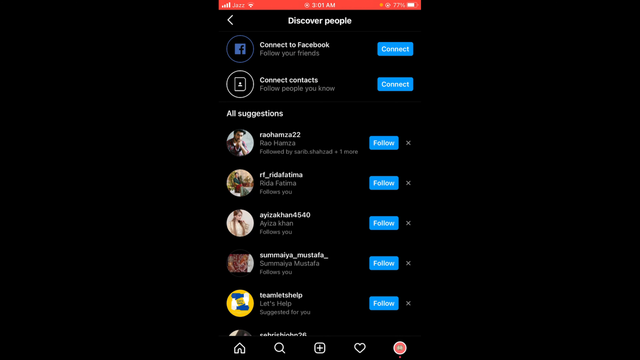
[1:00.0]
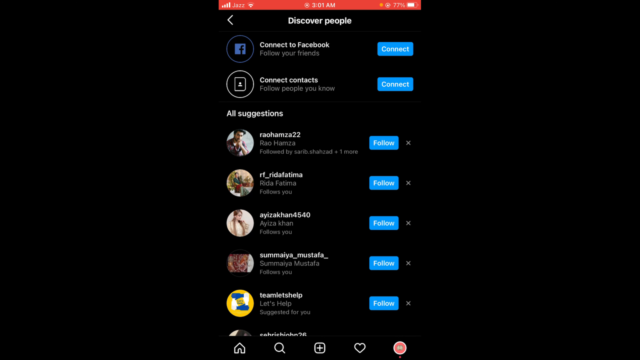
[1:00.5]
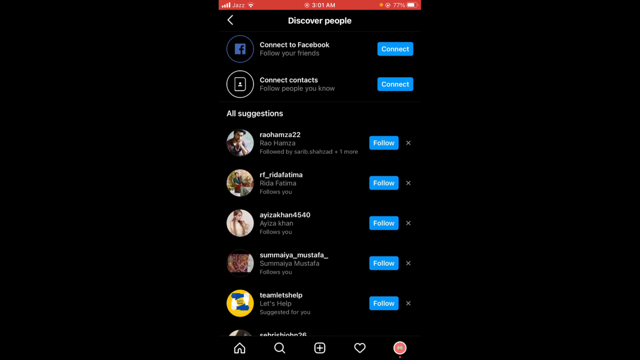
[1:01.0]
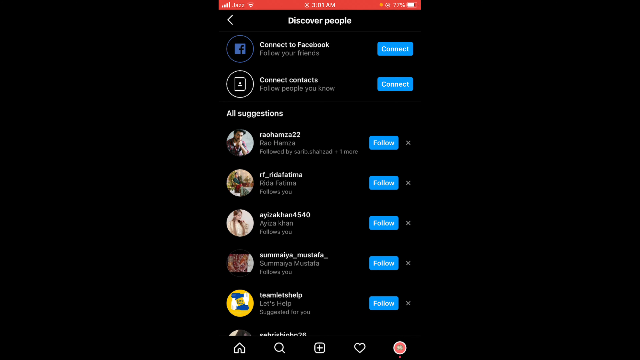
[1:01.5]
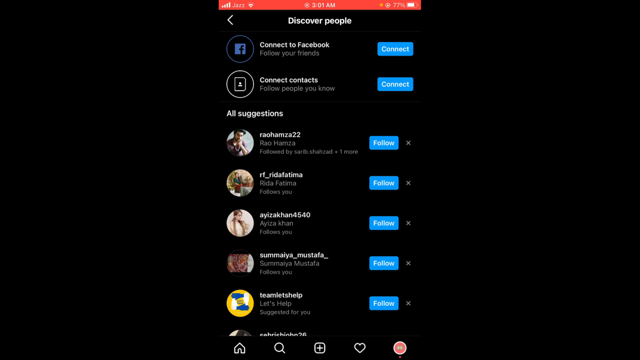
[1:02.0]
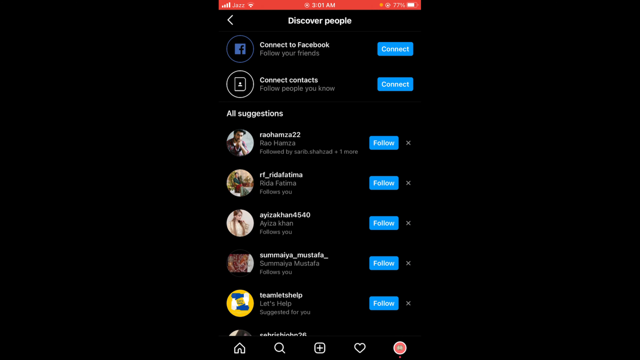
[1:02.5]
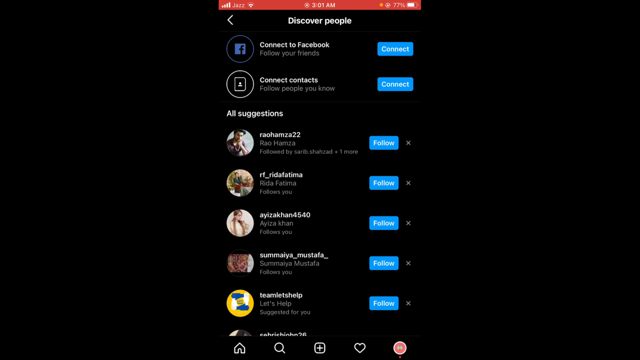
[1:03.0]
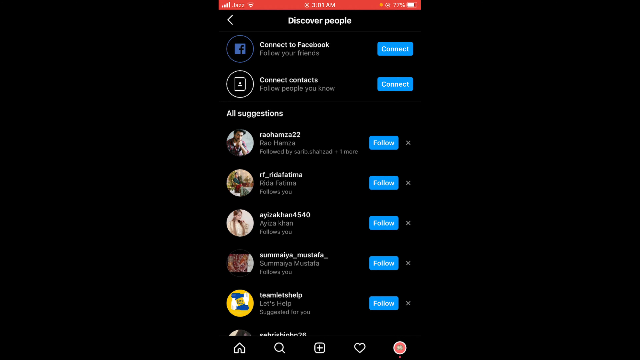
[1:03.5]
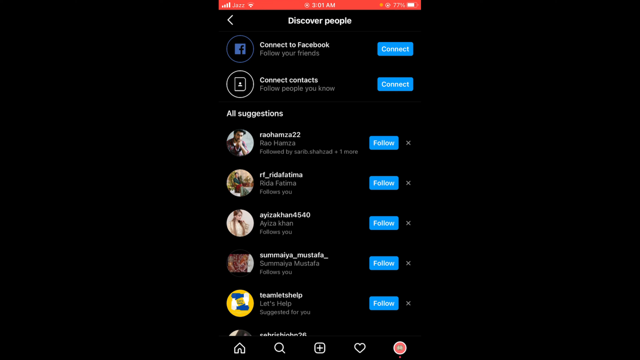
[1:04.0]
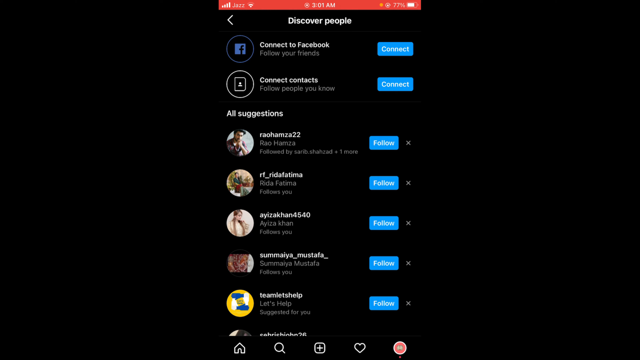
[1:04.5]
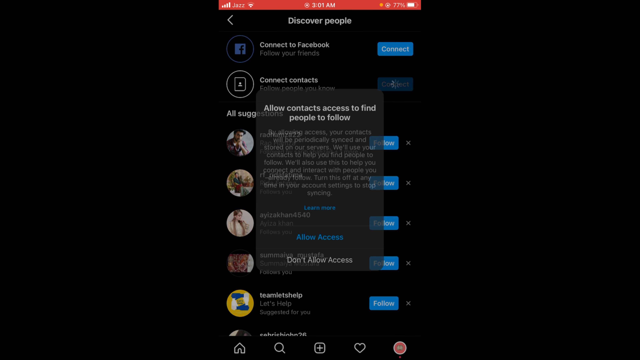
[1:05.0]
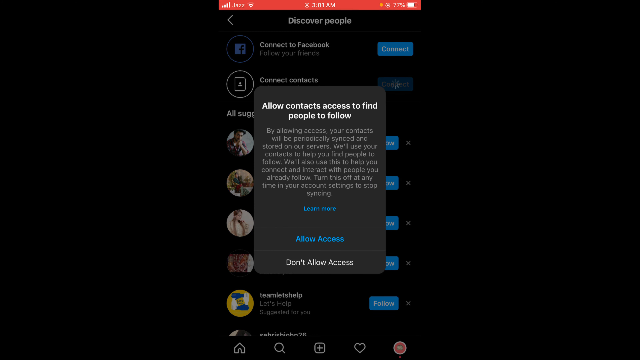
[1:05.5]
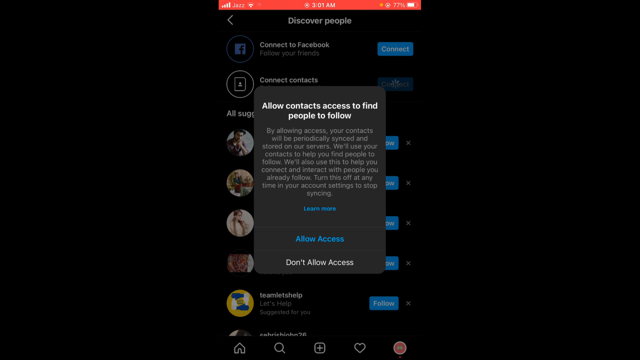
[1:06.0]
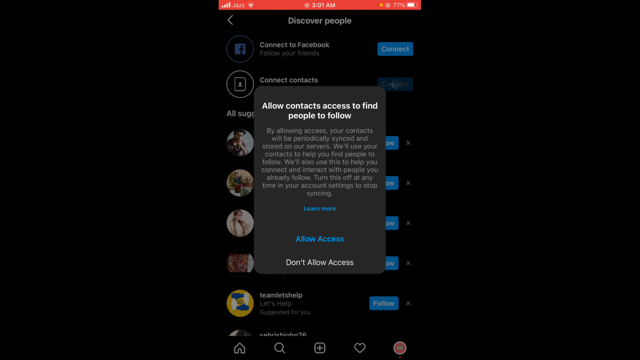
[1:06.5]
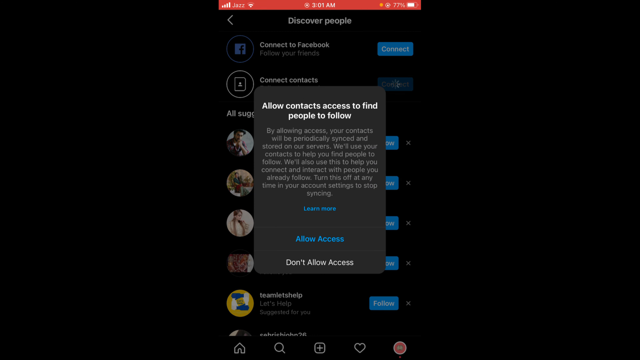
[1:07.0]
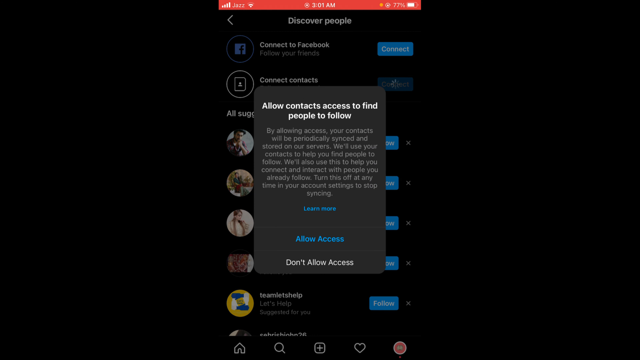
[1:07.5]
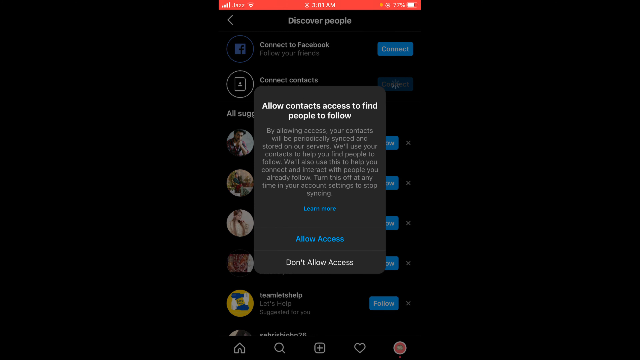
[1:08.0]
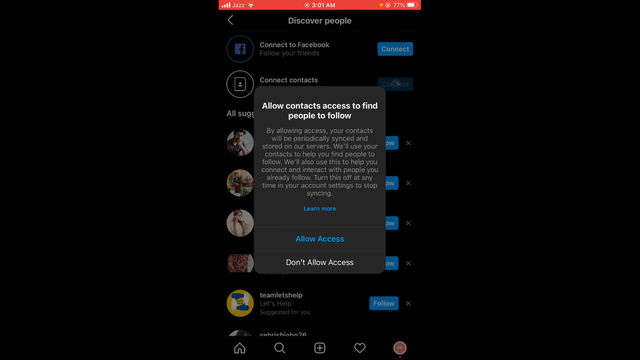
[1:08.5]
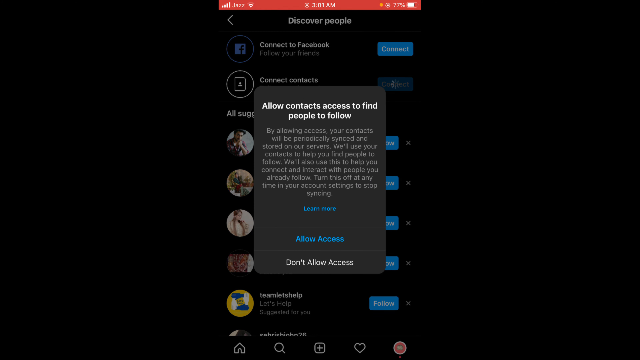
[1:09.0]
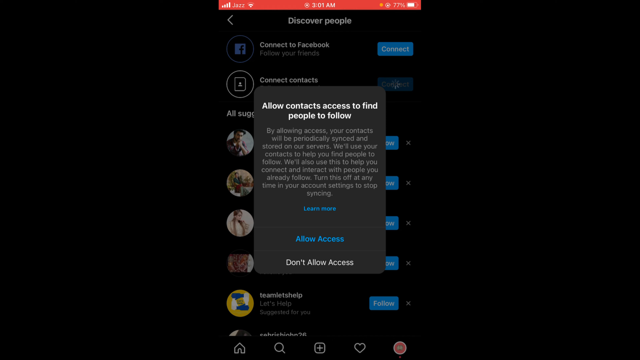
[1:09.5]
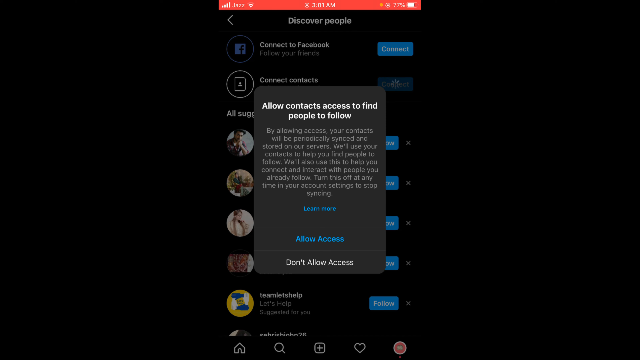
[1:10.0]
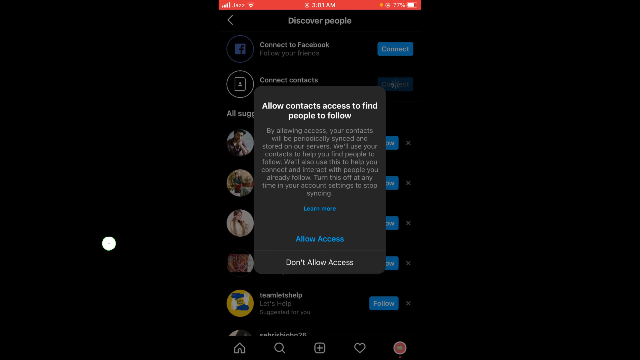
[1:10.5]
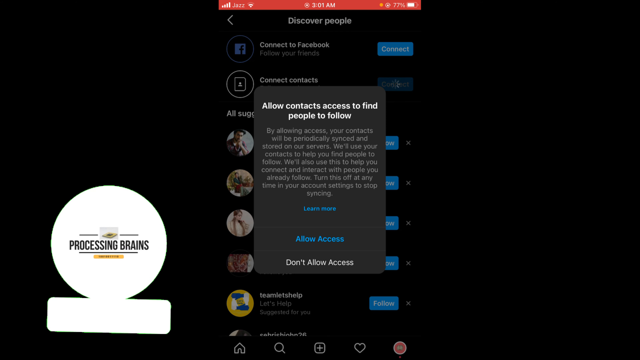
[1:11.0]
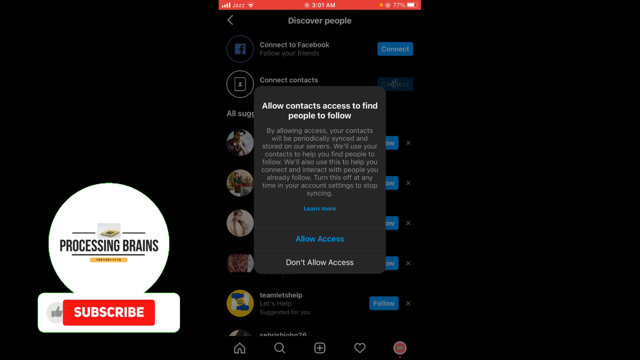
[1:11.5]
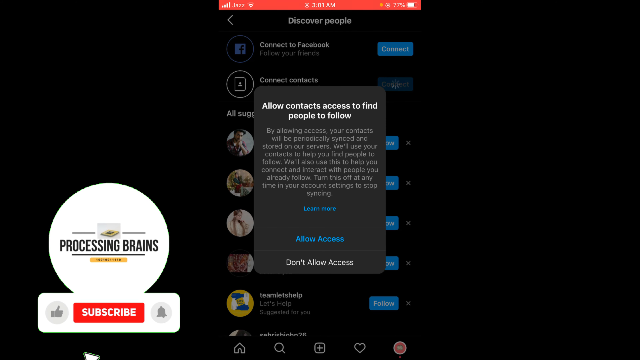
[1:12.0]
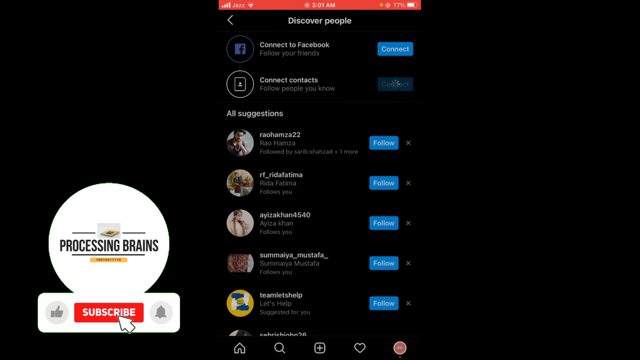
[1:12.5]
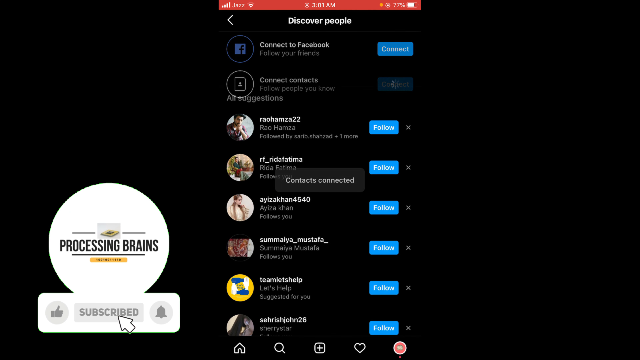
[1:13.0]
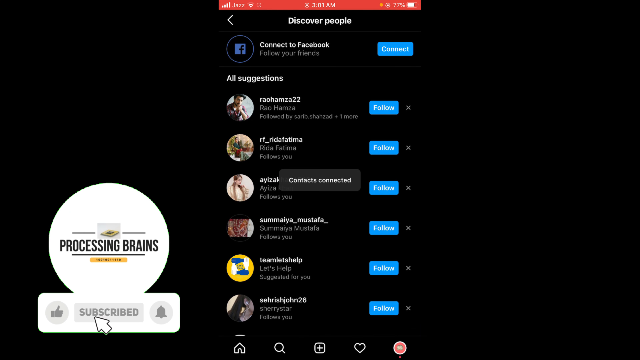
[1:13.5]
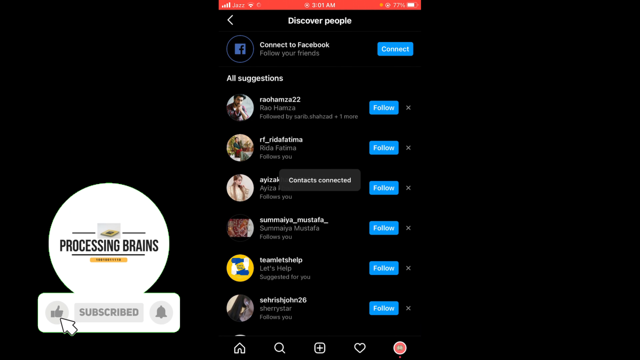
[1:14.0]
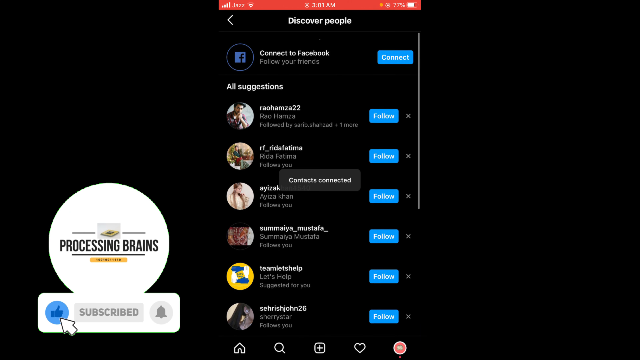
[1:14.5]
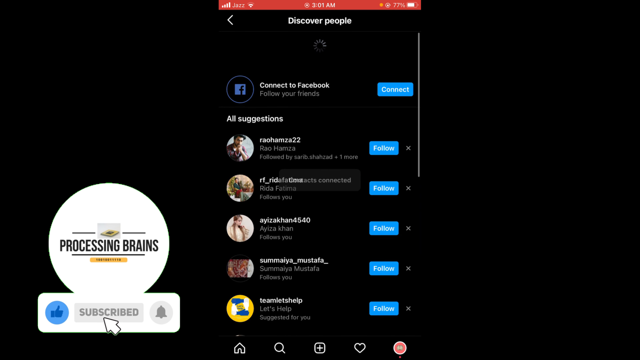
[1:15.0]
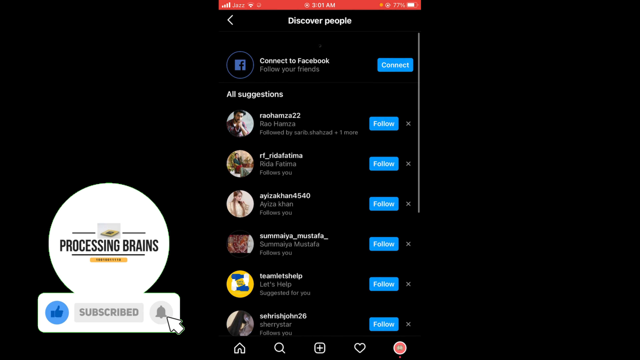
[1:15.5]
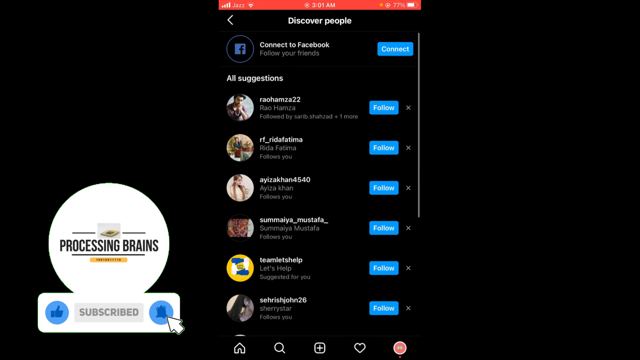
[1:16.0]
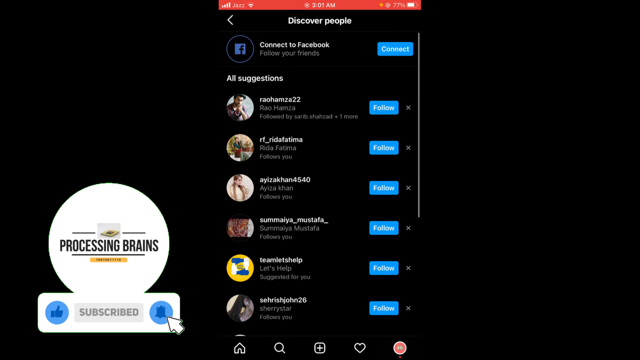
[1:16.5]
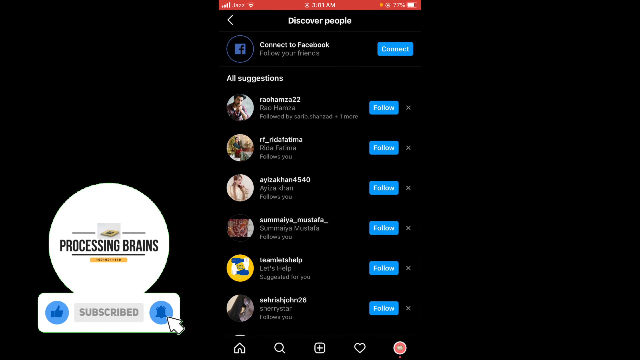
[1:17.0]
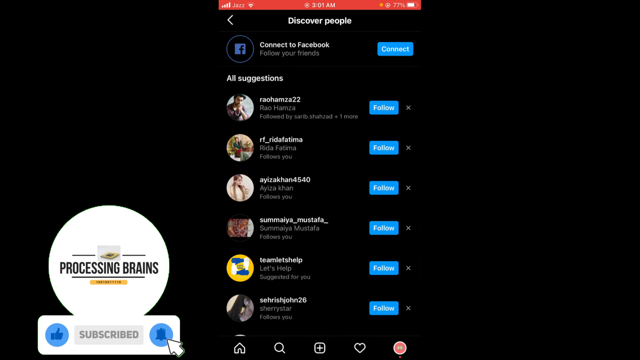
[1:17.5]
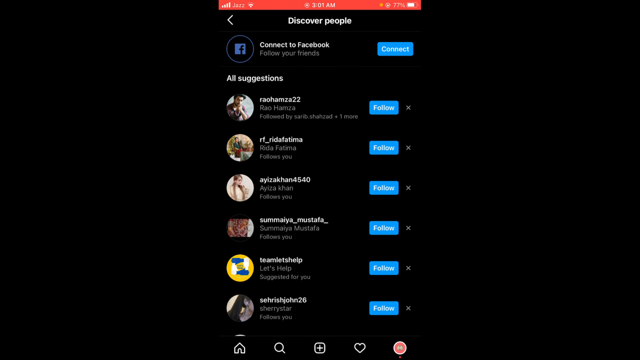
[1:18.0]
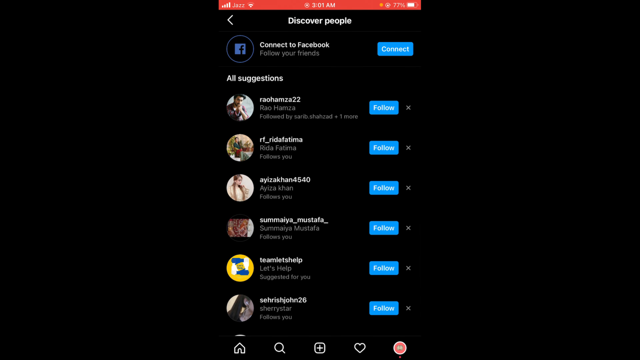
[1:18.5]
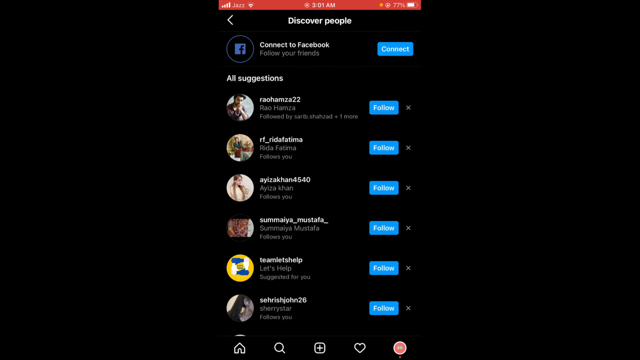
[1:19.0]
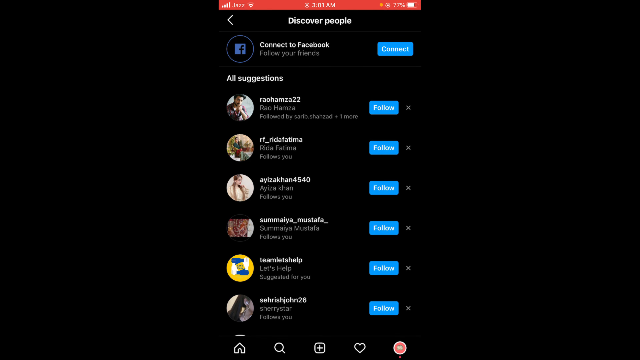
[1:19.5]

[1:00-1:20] The Discover People section of Instagram is on screen, in what appears to be a screen recording of a phone that is recording at that moment. A pop-up says "allow contacts access to find people to follow." There also appears to be a pop-up on the left side of the phone for processing brains, apparently to subscribe on YouTube; subscribe is selected and it says "subscribed." The phone whose screen is being recorded looks like it has contacts connected. The view scrolls up and down, and the processing brains pop-up goes away. The Discover People page also offers a way to connect to Facebook and to connect with other contacts. The pop-up allowing contacts access to find people to follow offers a choice of "allow access" or "don't allow access."